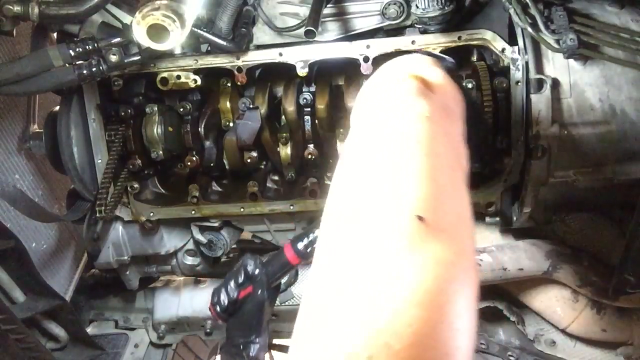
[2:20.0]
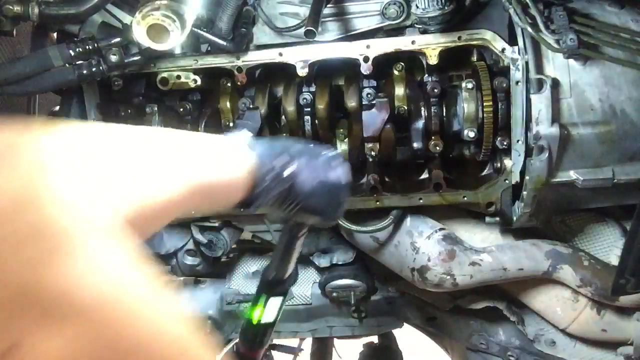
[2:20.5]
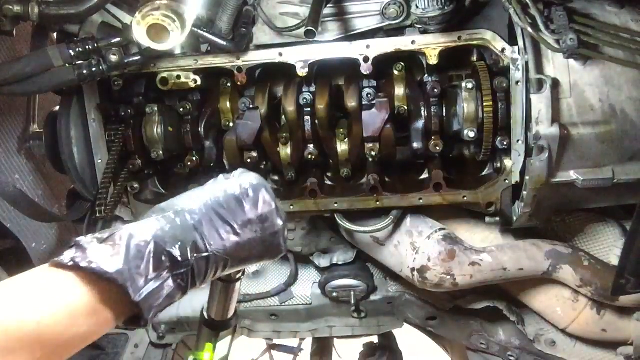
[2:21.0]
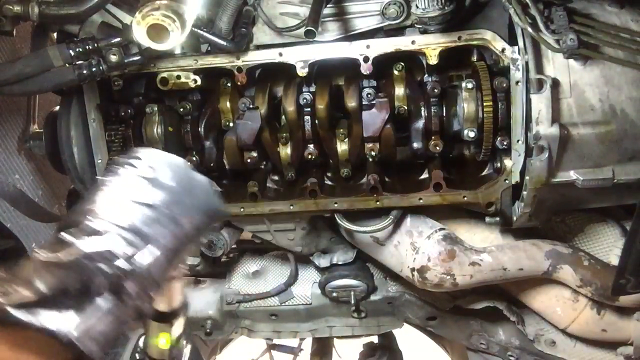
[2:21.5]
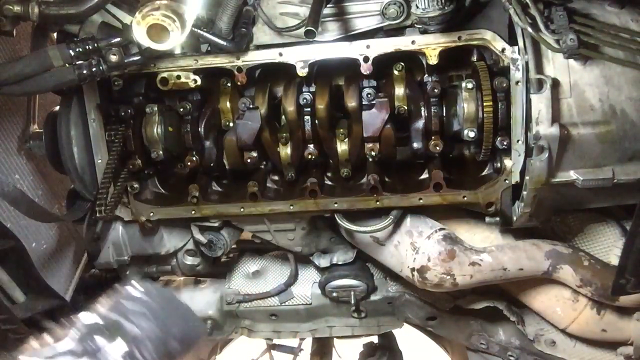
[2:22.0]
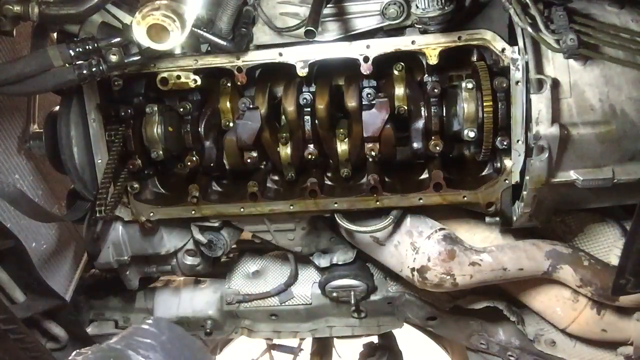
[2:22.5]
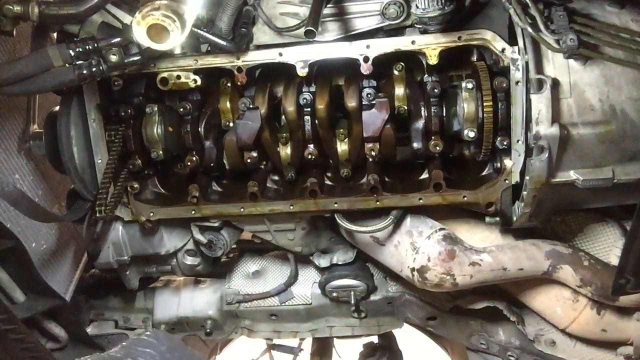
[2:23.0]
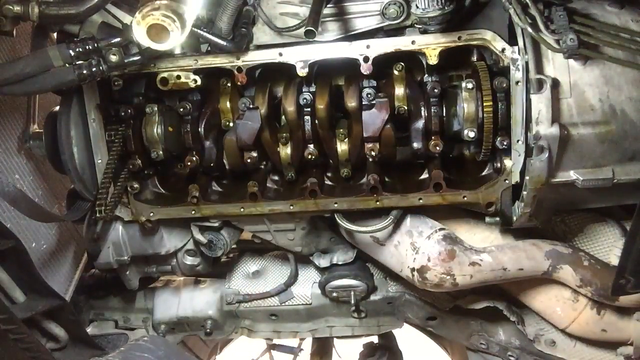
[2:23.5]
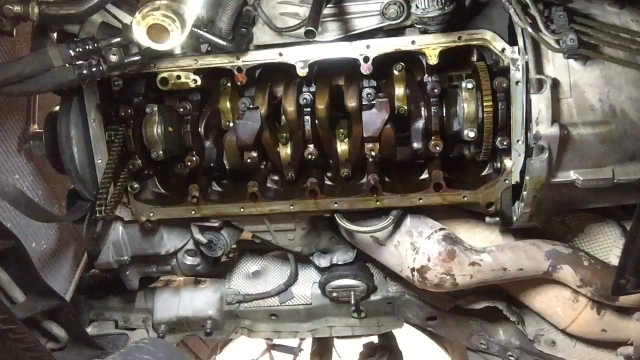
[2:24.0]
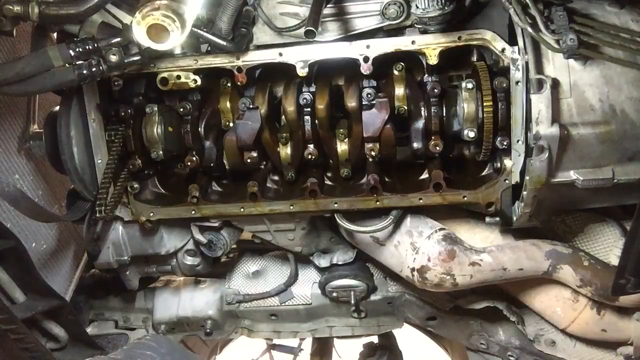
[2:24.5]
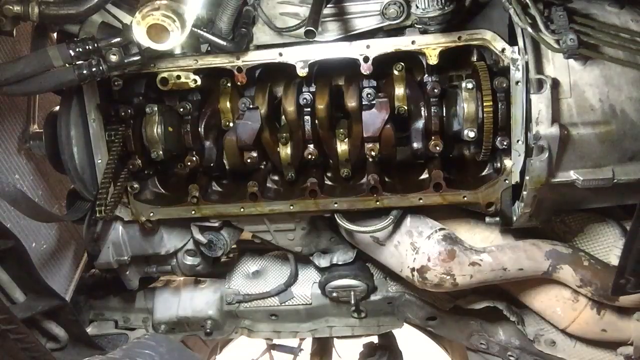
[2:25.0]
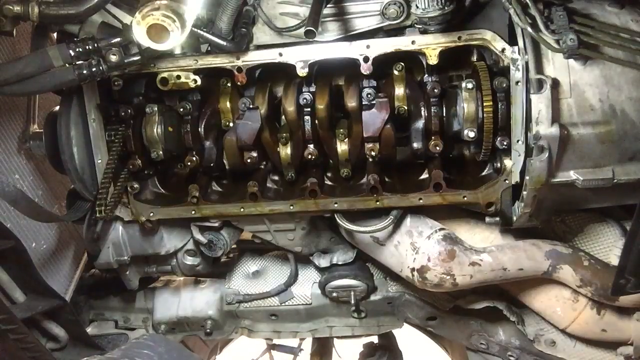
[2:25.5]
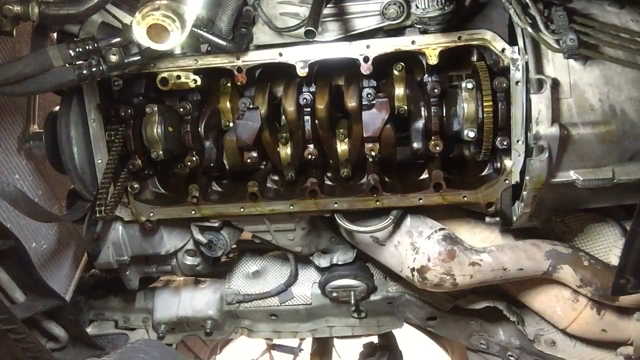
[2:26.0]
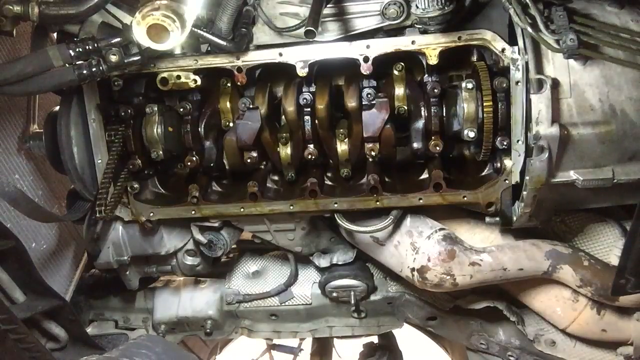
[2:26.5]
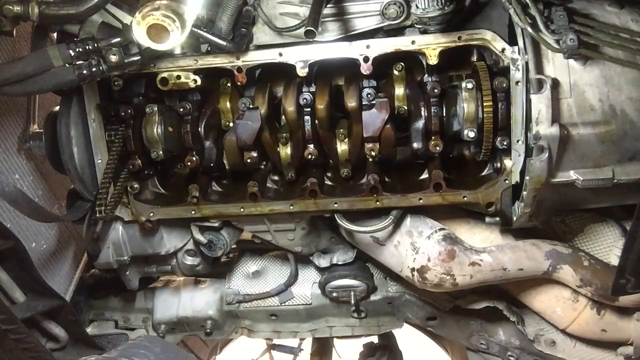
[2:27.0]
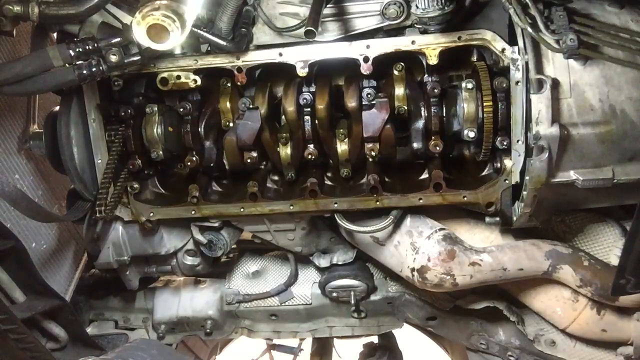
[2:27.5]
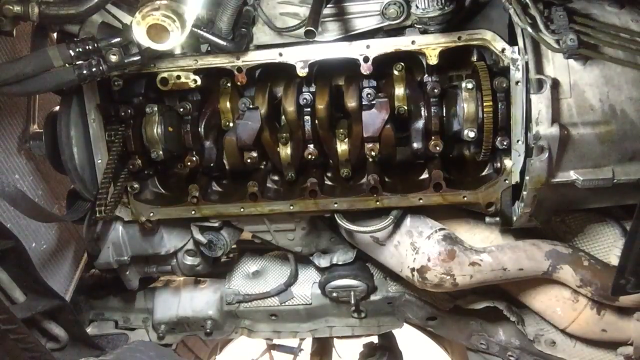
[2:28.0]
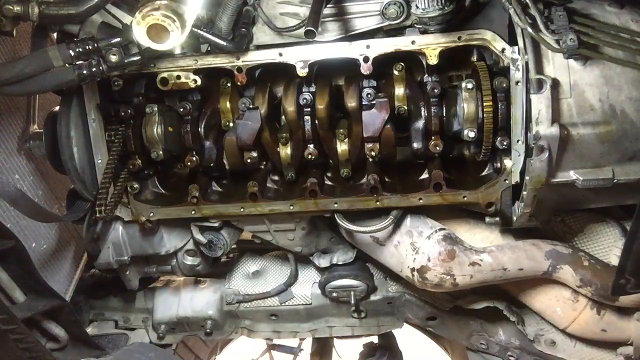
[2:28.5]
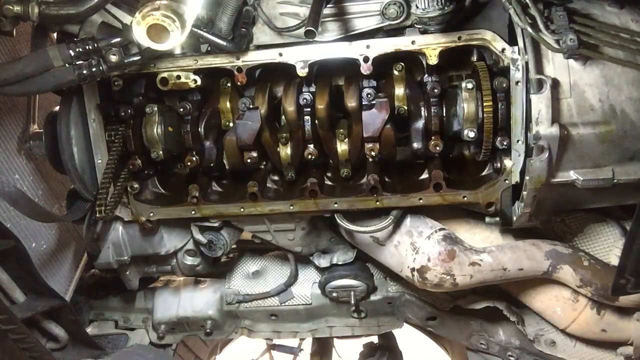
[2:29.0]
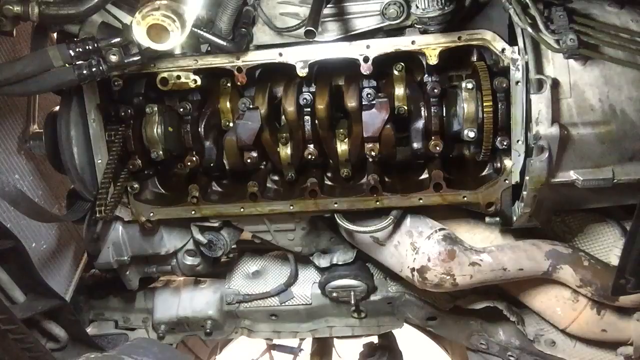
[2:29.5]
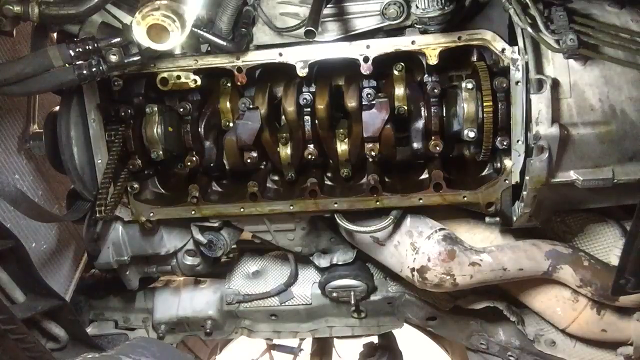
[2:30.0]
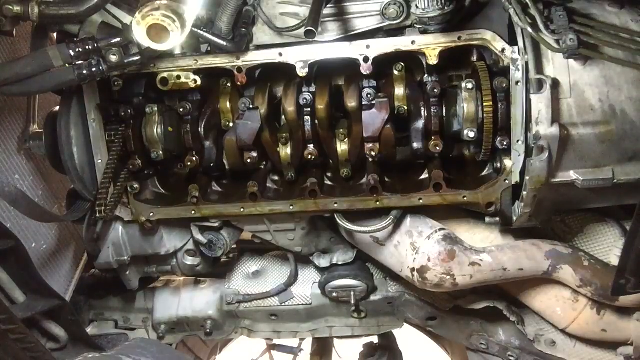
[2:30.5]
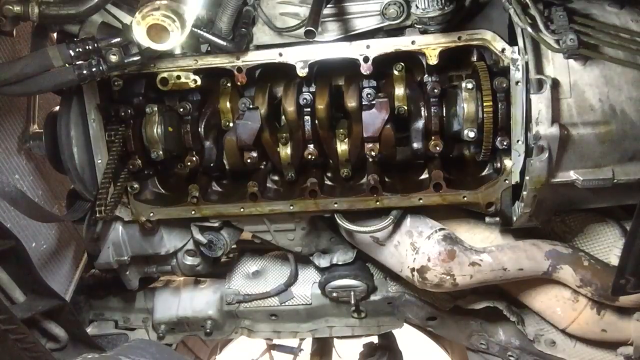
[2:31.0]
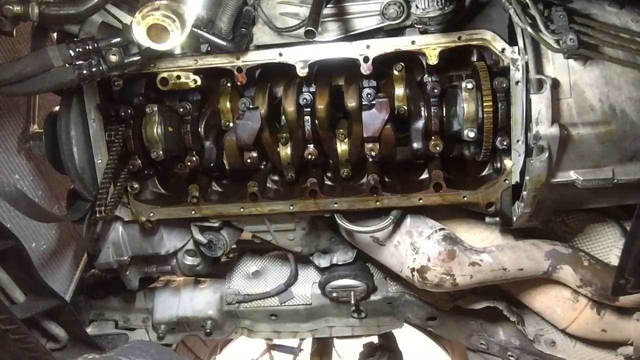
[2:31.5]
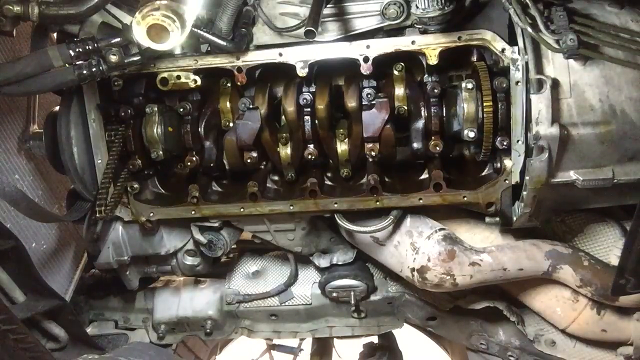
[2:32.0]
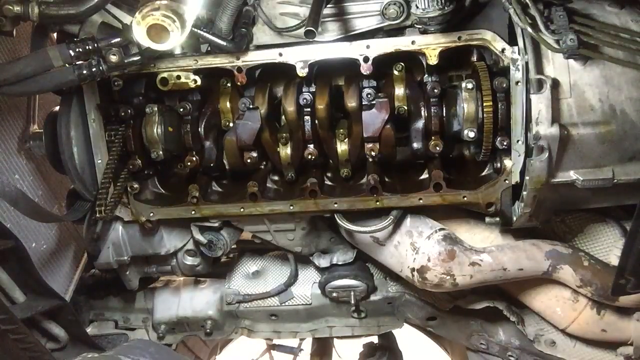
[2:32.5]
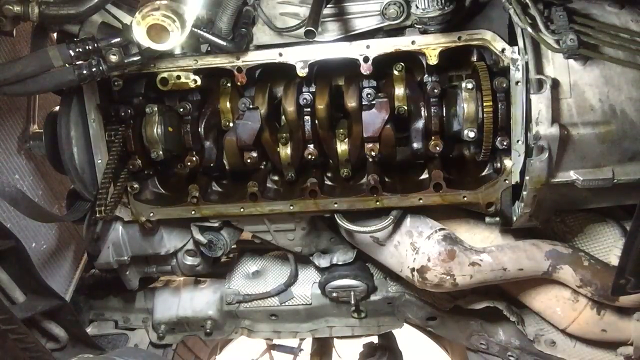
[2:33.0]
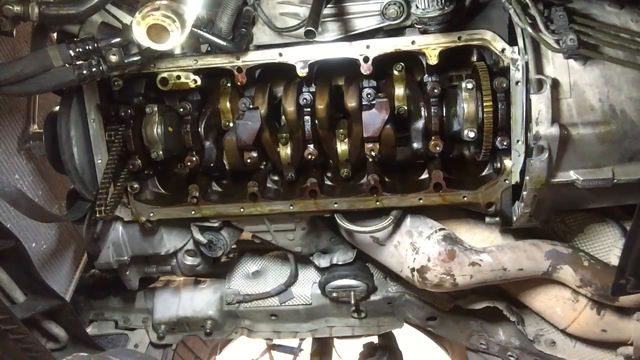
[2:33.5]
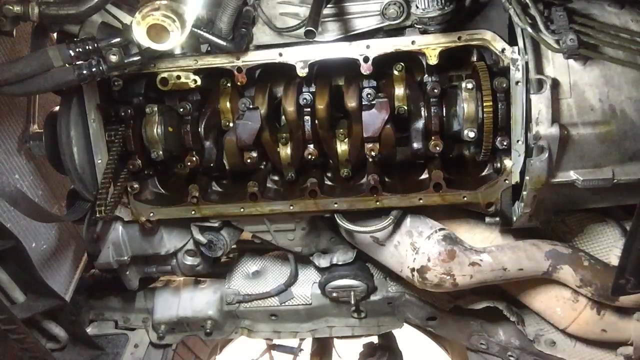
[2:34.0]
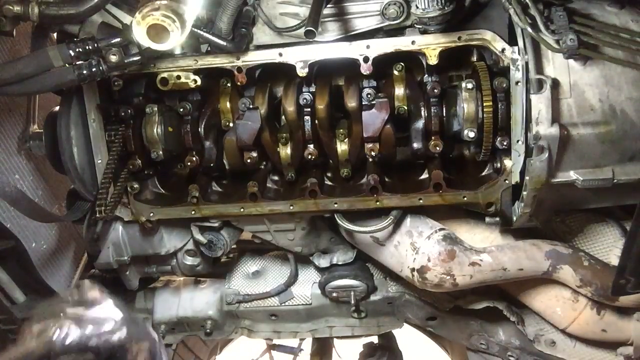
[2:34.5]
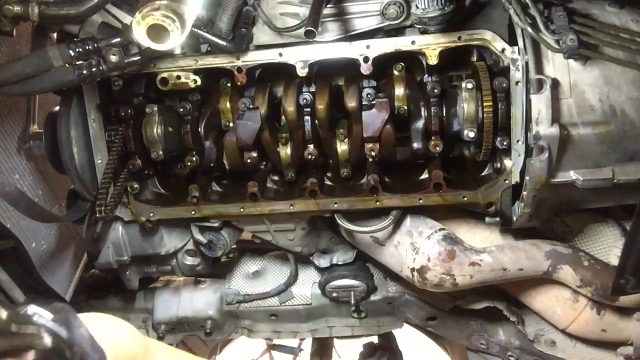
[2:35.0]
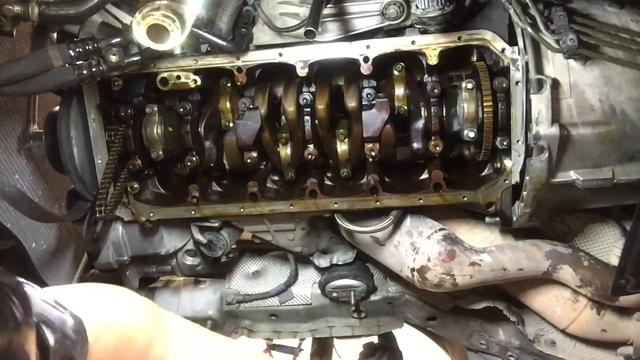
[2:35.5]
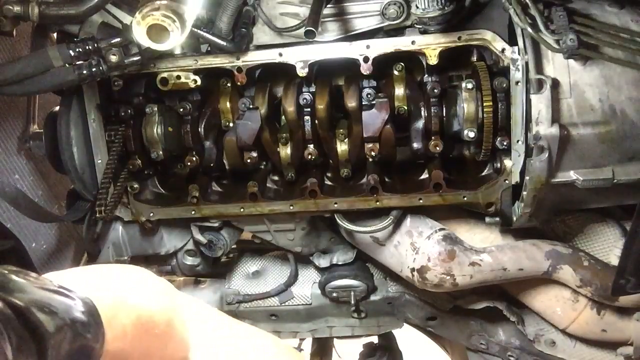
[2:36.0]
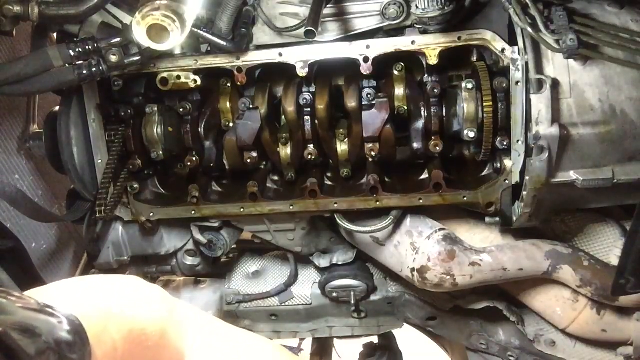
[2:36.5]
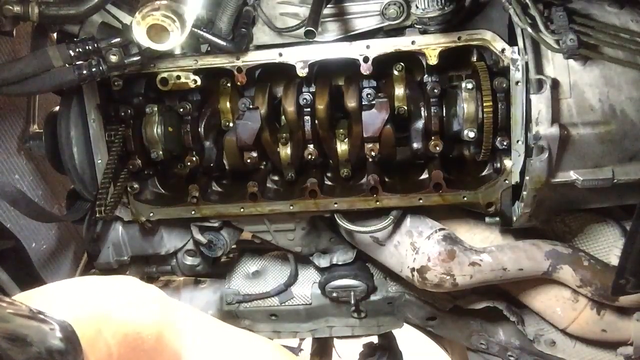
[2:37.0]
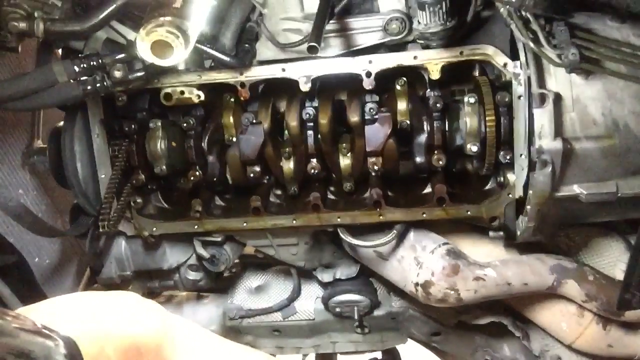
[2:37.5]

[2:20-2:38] The person removes the device, and the frame is entirely taken up by the engine, with no tool or device in view; the metallic, complicated object is just sitting in the frame. It looks like it is probably on the underside of a car, possibly a vehicle that has been raised up. Metal pipes come out from both sides. It appears to have many small moving metal pieces, some brass or kind of gold in color, but mostly everything is gray, possibly steel or a similar metal. Not much else happens.